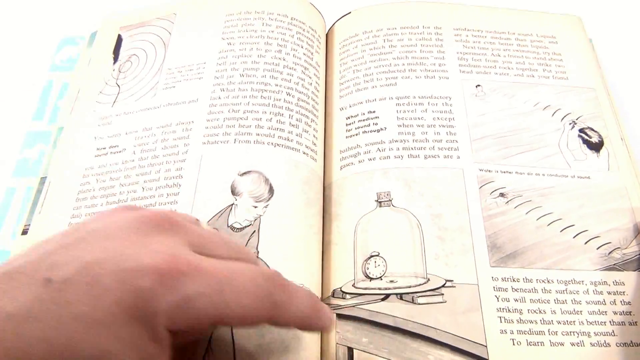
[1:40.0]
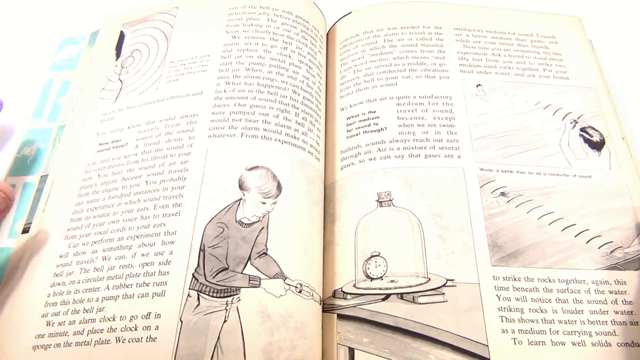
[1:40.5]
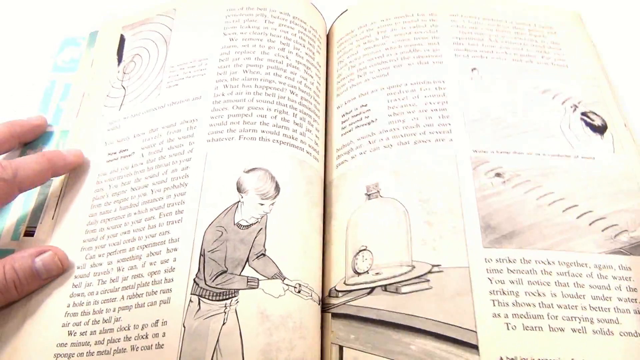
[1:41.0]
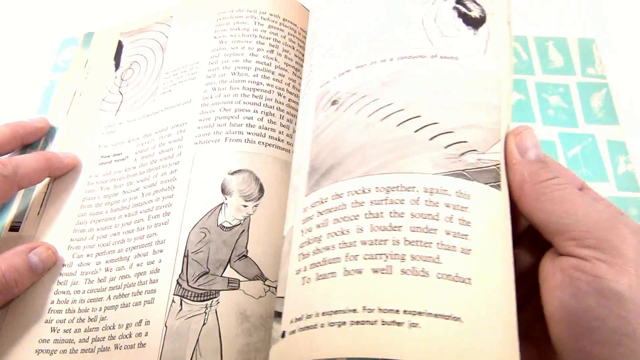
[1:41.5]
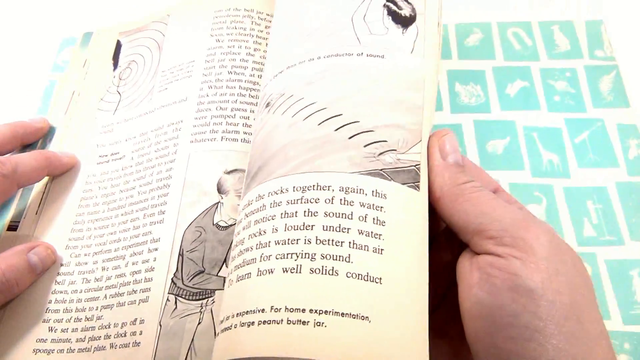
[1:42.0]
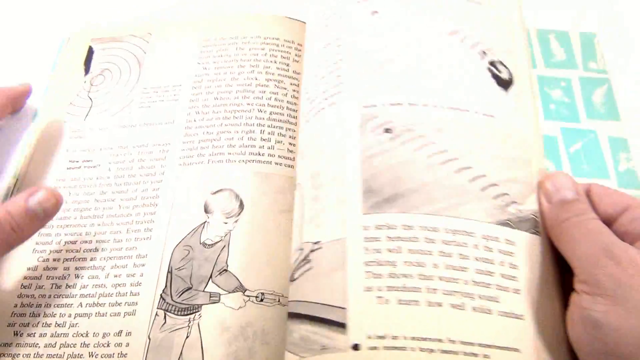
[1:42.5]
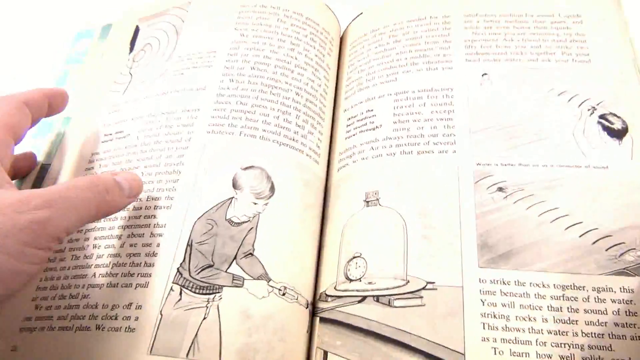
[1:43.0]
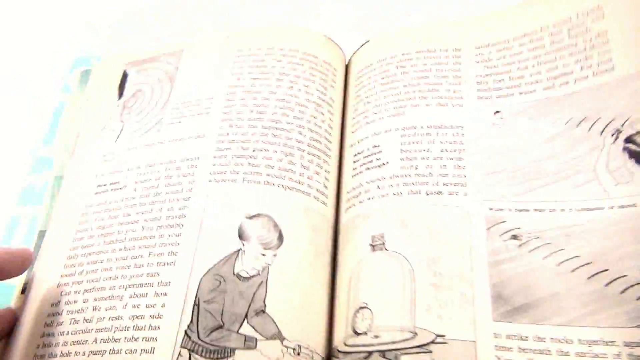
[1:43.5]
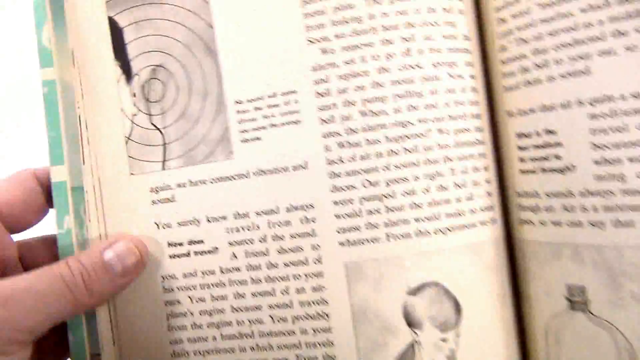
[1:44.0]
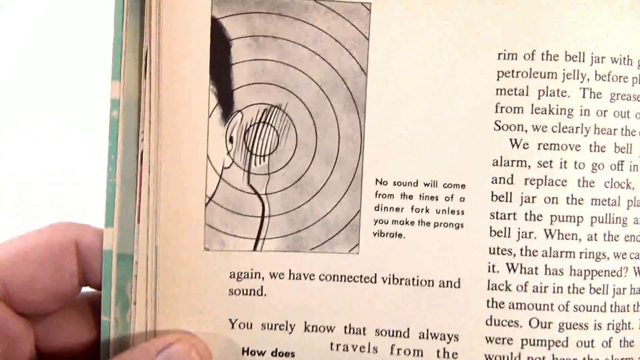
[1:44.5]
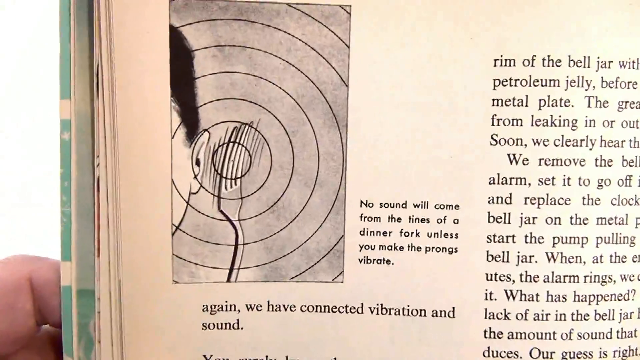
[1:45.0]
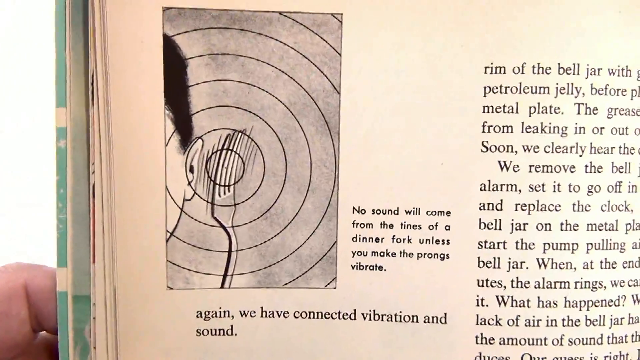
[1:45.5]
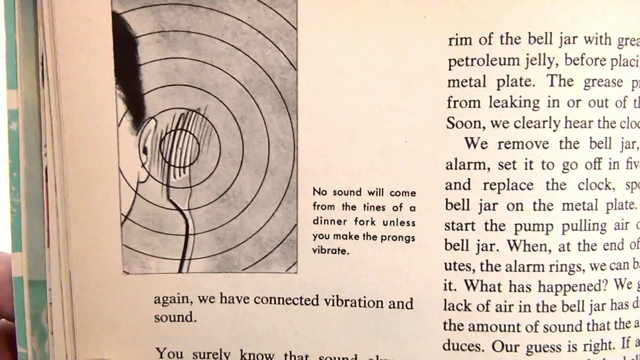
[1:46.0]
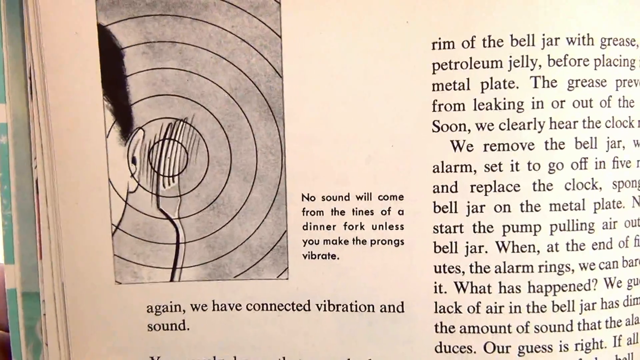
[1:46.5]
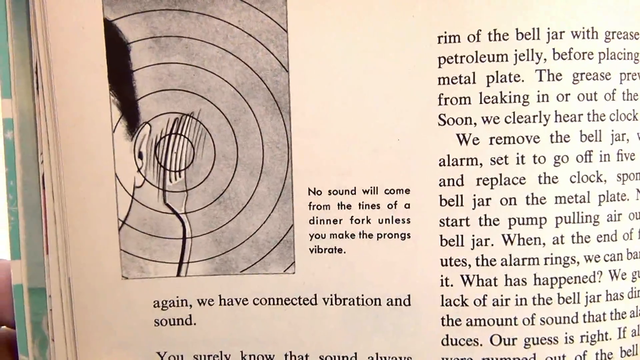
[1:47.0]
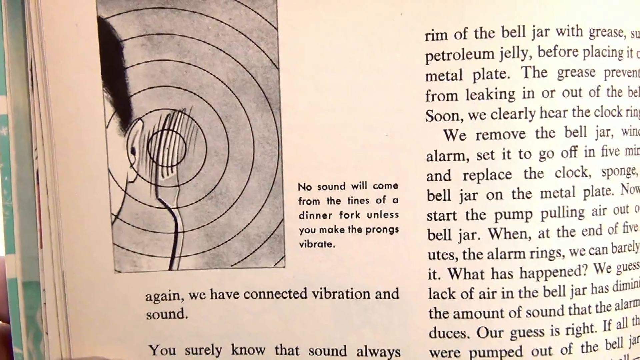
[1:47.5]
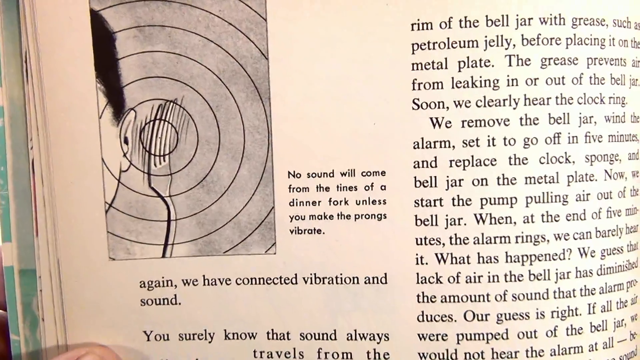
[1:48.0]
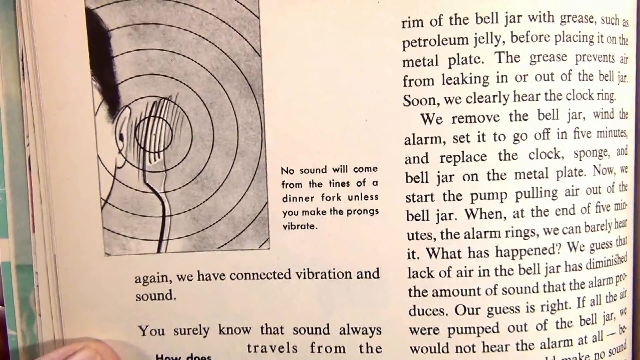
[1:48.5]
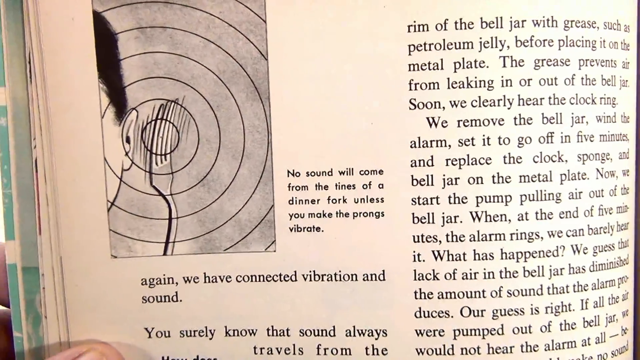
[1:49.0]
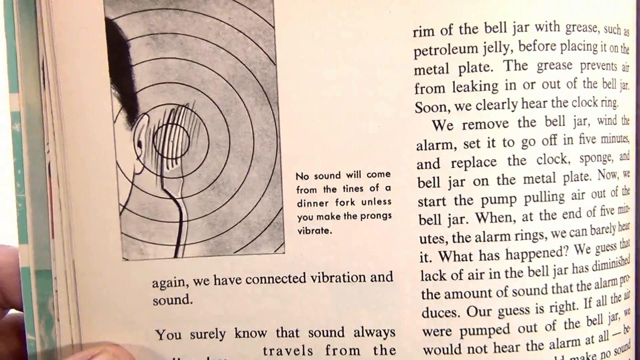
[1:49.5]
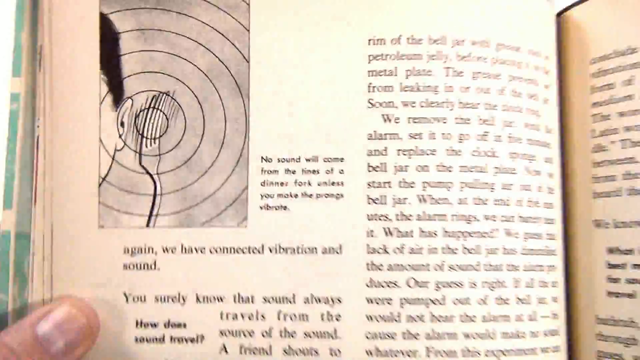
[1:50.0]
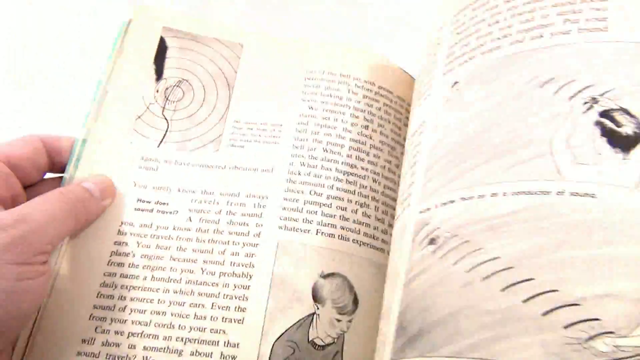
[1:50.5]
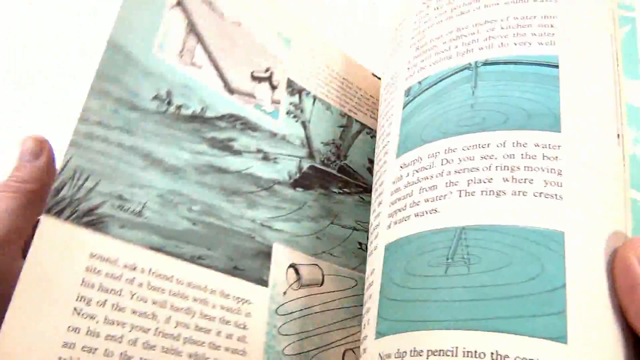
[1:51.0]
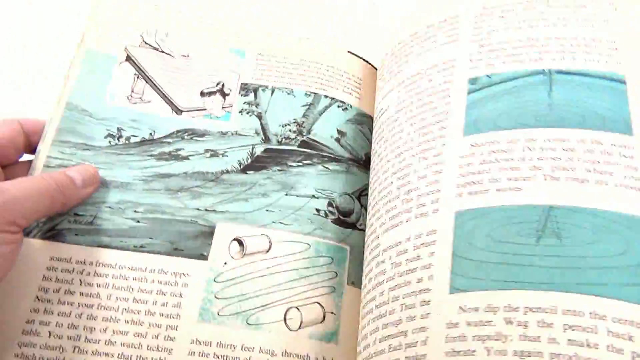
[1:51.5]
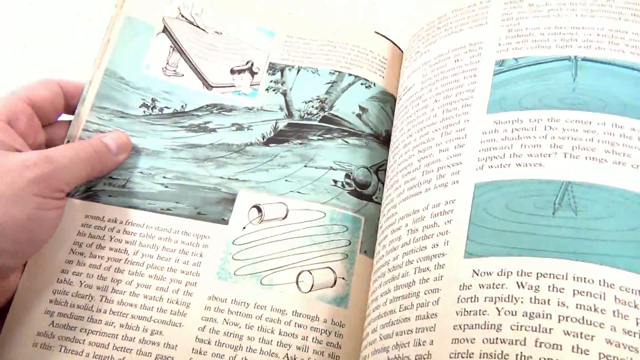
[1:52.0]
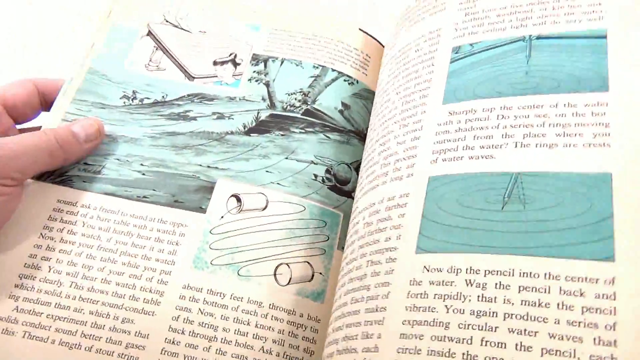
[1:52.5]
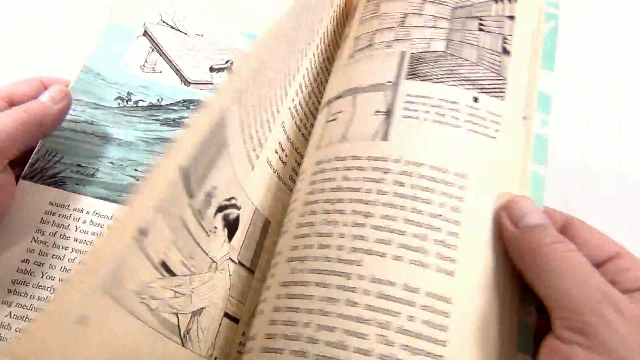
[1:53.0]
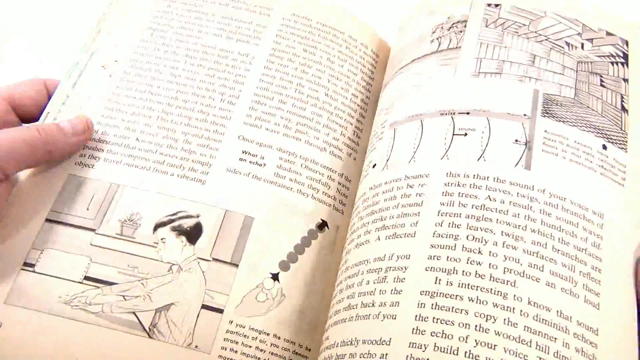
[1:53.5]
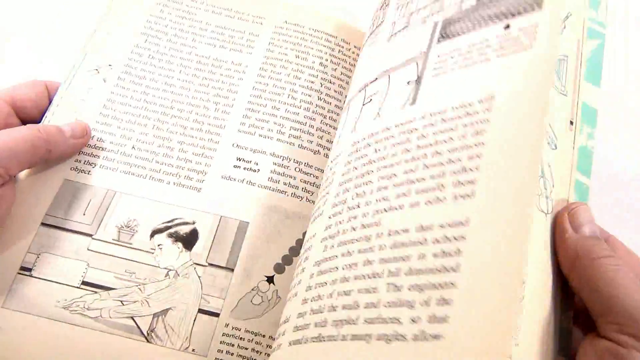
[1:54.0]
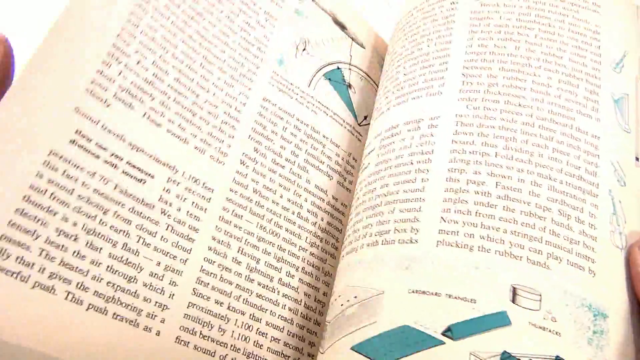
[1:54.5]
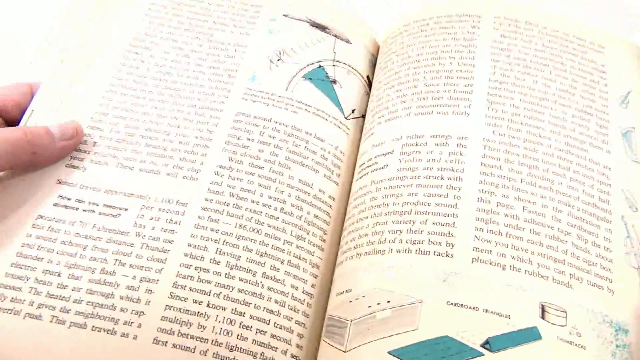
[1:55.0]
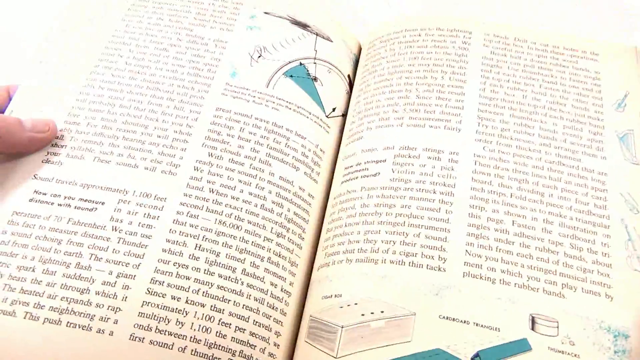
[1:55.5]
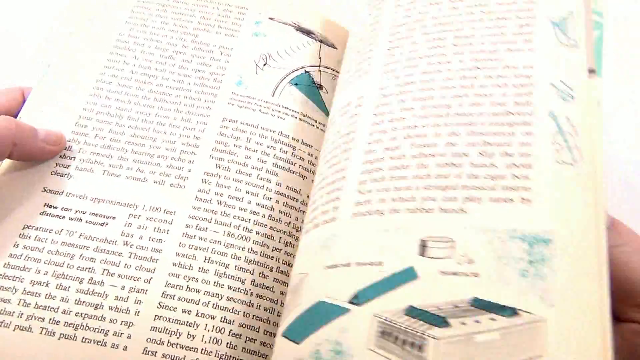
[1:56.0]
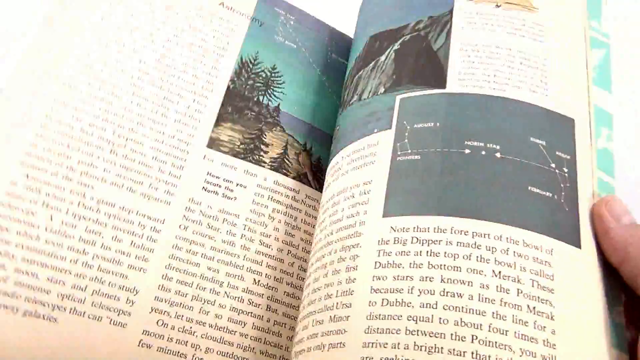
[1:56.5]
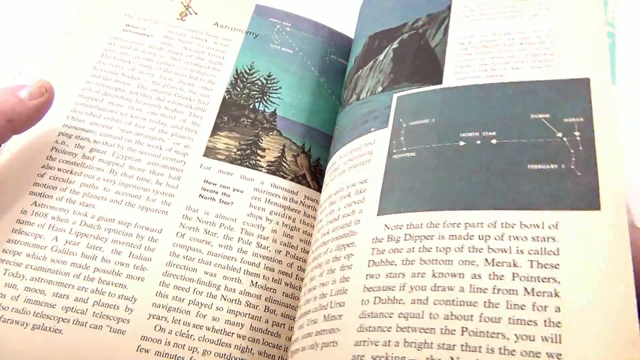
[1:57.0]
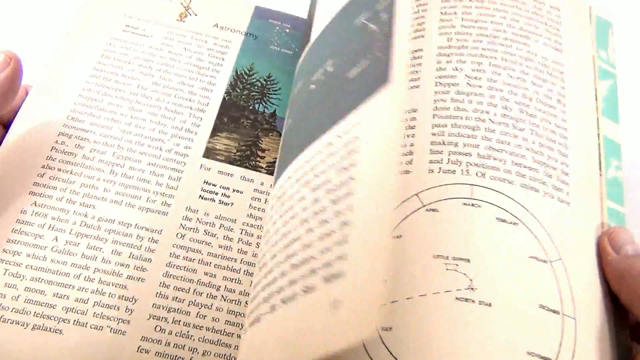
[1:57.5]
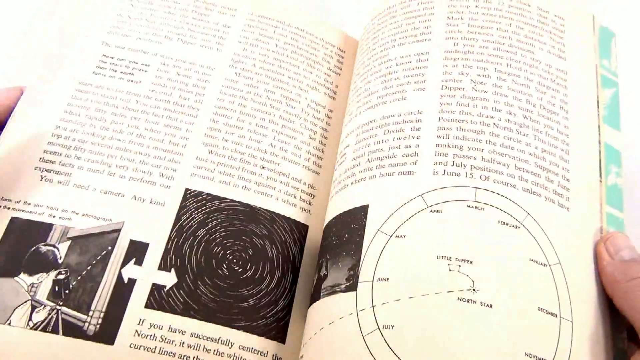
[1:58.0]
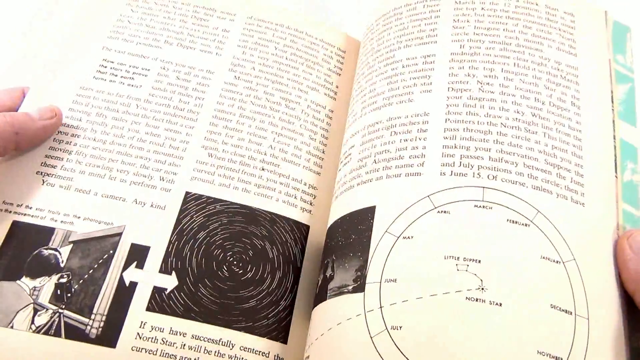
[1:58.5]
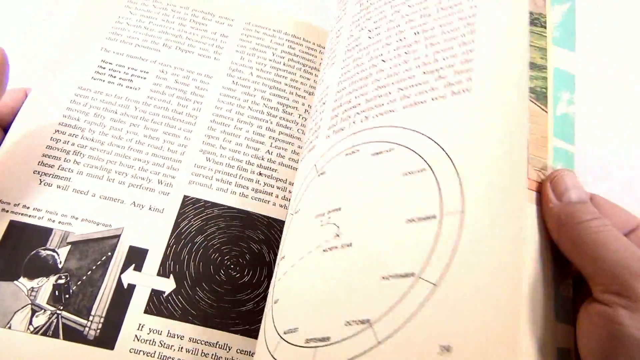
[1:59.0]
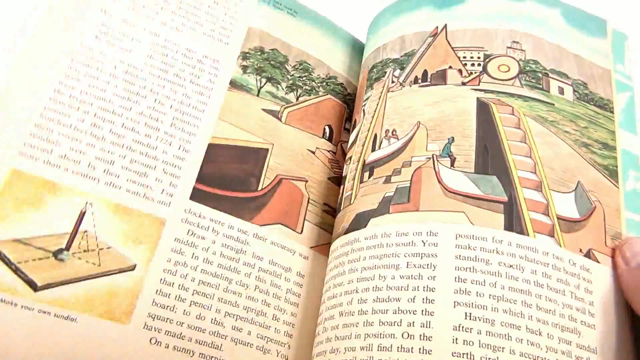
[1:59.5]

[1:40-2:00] The screen is white, with an open pamphlet full of small writing that looks very old, like an old publication, with several older-looking pictures. There is one picture at the far top right. On the left is a picture of a little boy who appears to be white, his facial details not really clear. In the center area is an image of a huge glass jar with a cork and a small clock inside, which looks like it is on some type of table with books under it. A white-skinned hand holding the book partially covers the little boy so the whole picture cannot be seen. On the right side of the page are two images that appear to show straight black lines in some type of sand. The hand moves away as if to flip, then there is a close-up of a picture in the top right corner of a fork near an ear with circles all around the back of it. He flips about six pages to the left and lands on a picture more colorful than the others.